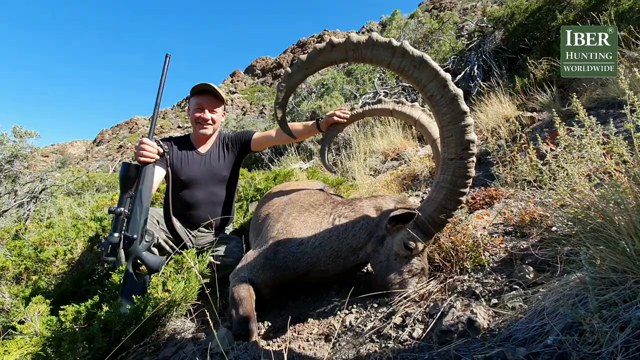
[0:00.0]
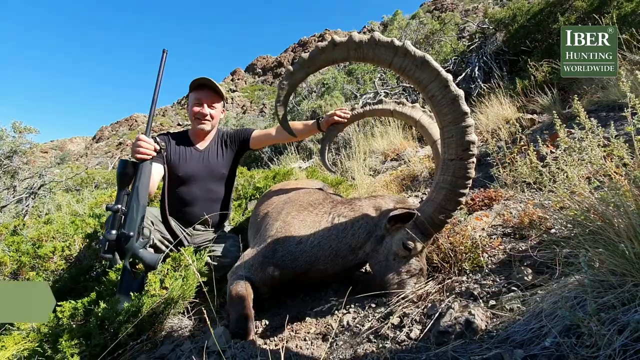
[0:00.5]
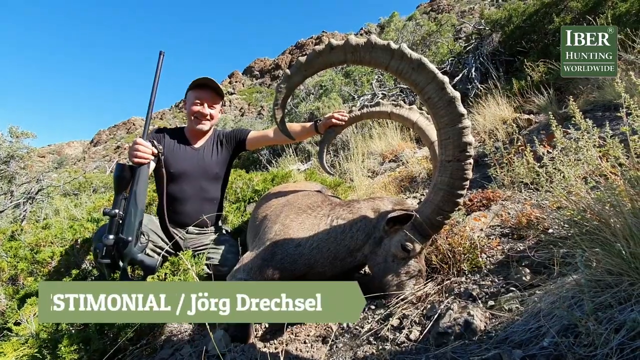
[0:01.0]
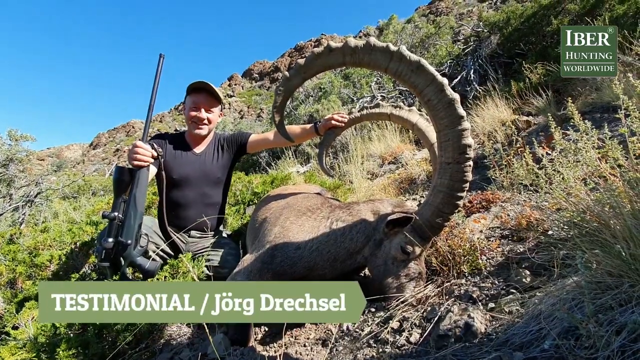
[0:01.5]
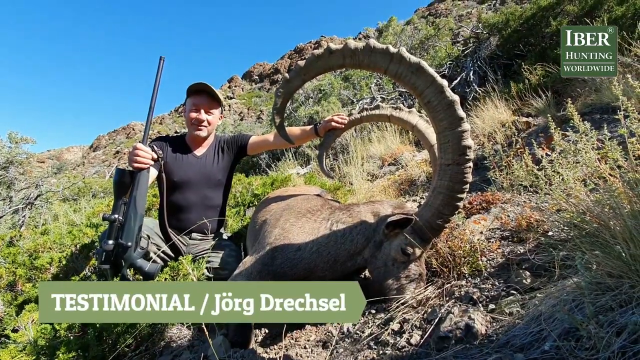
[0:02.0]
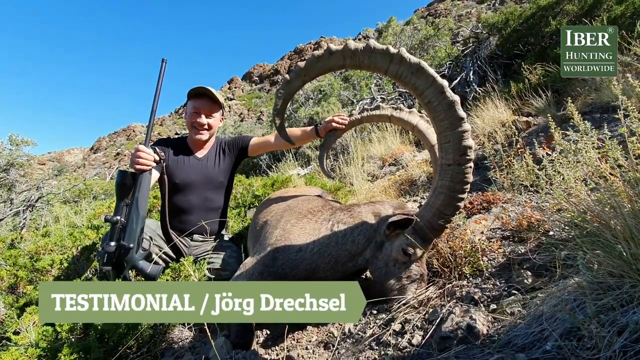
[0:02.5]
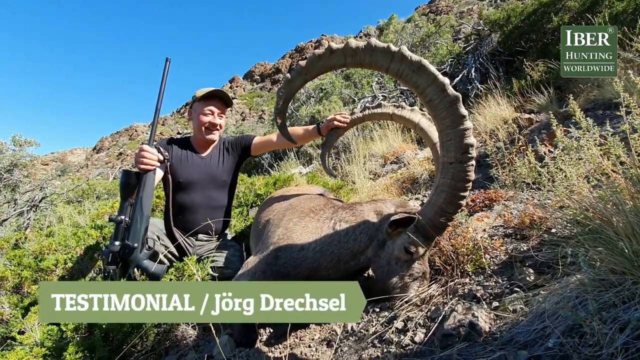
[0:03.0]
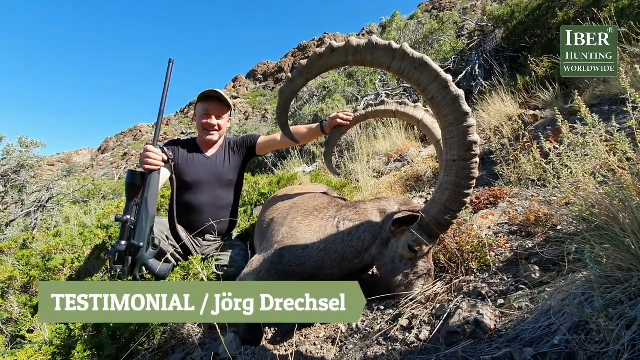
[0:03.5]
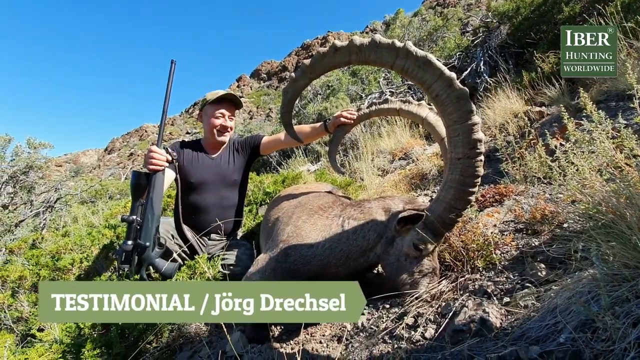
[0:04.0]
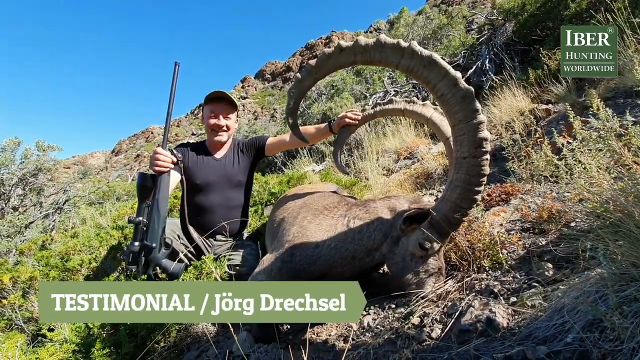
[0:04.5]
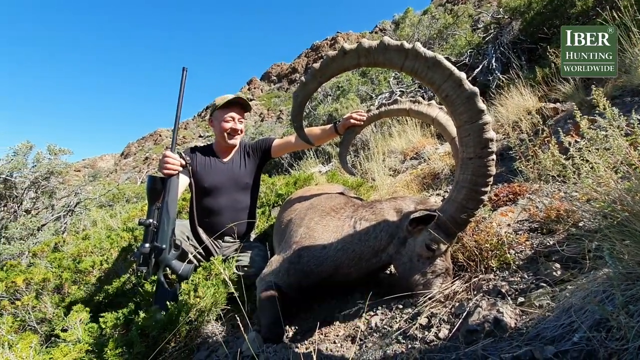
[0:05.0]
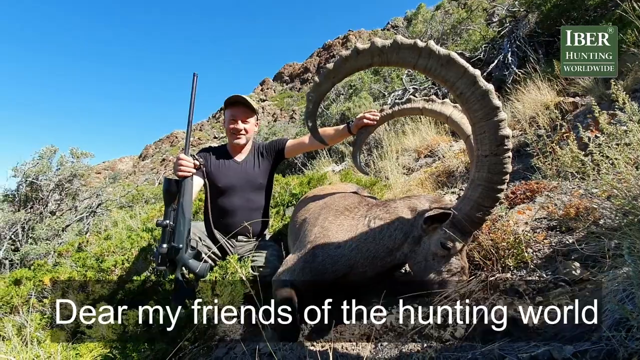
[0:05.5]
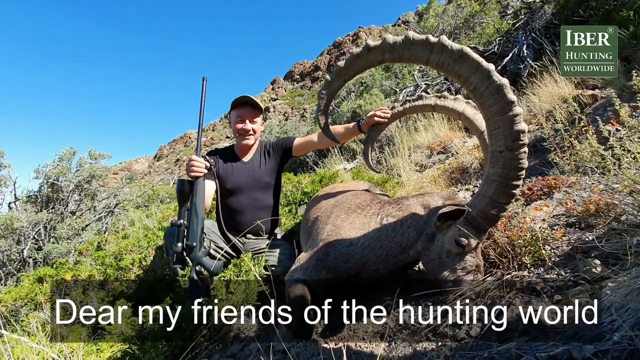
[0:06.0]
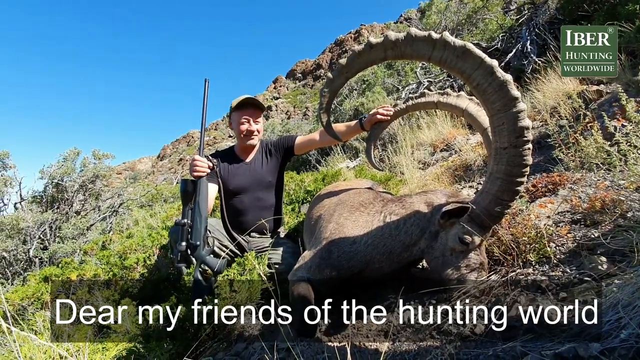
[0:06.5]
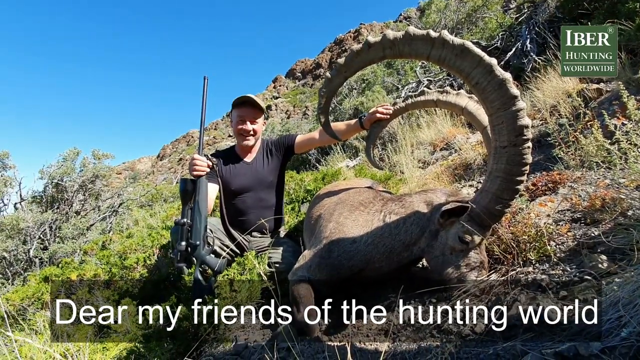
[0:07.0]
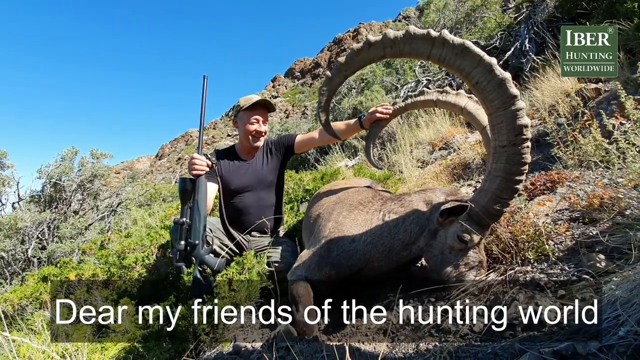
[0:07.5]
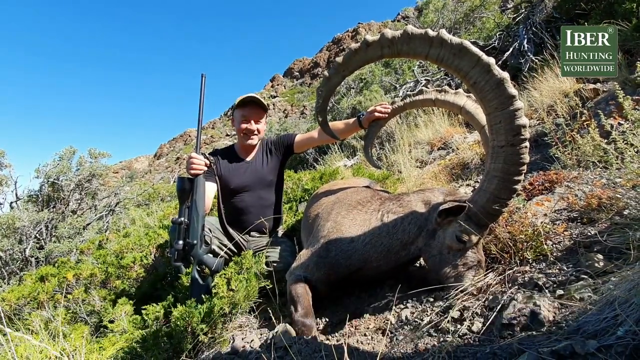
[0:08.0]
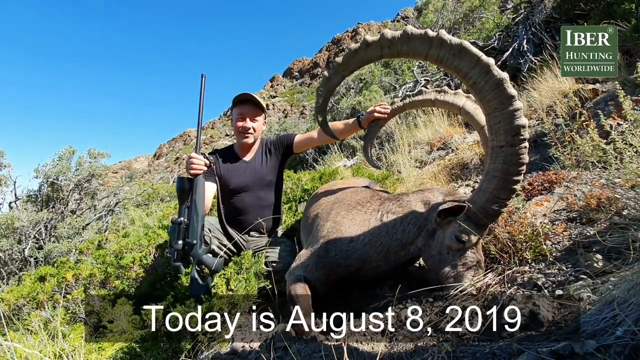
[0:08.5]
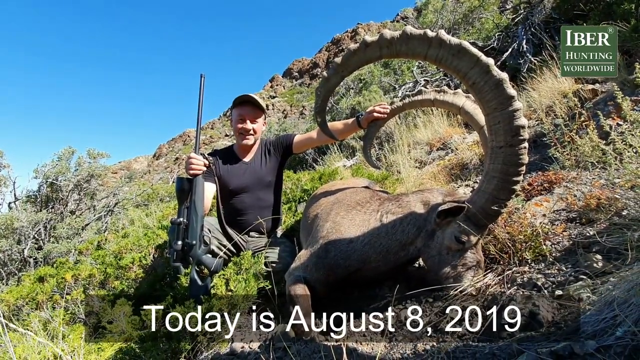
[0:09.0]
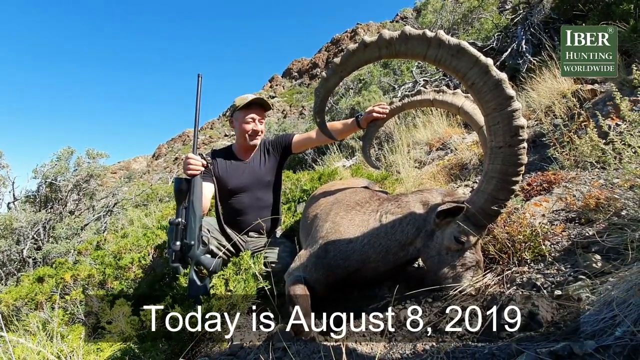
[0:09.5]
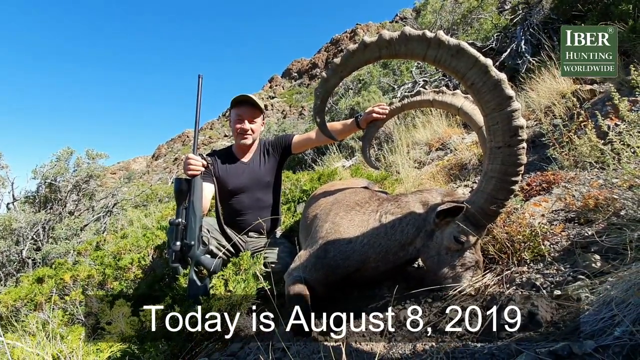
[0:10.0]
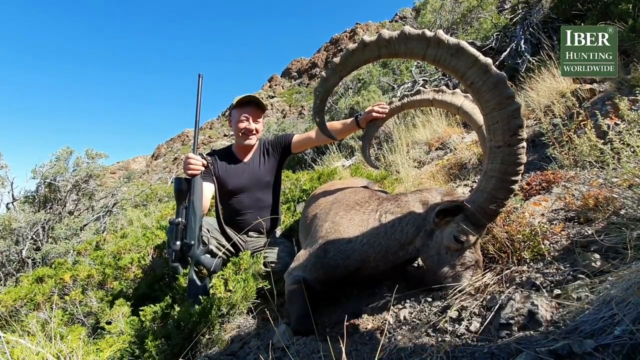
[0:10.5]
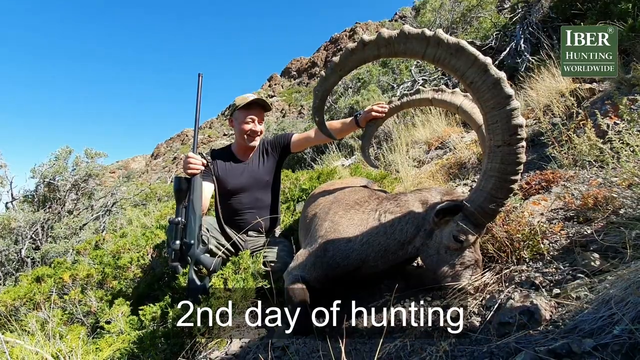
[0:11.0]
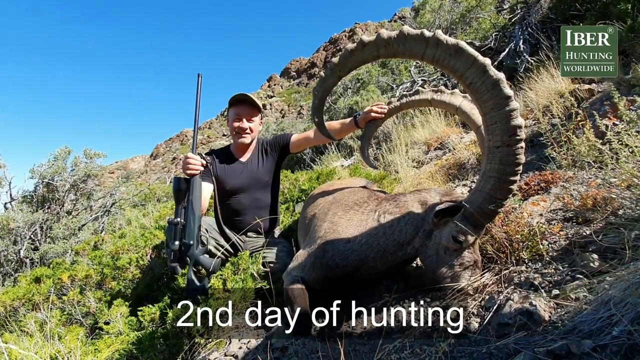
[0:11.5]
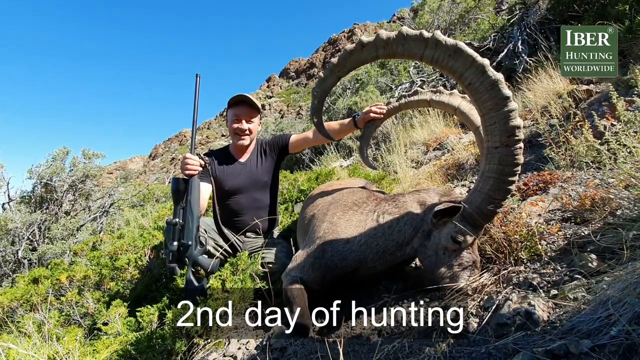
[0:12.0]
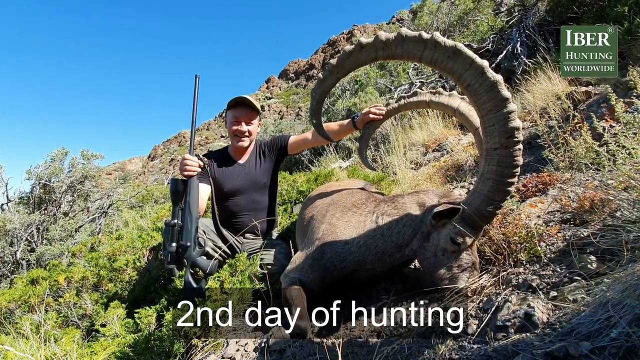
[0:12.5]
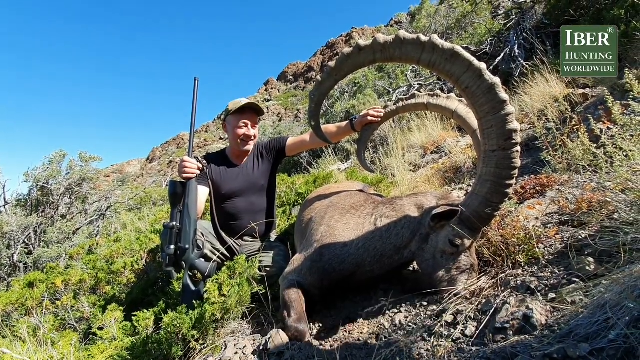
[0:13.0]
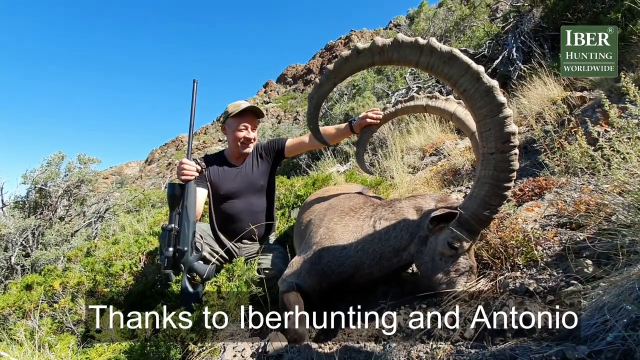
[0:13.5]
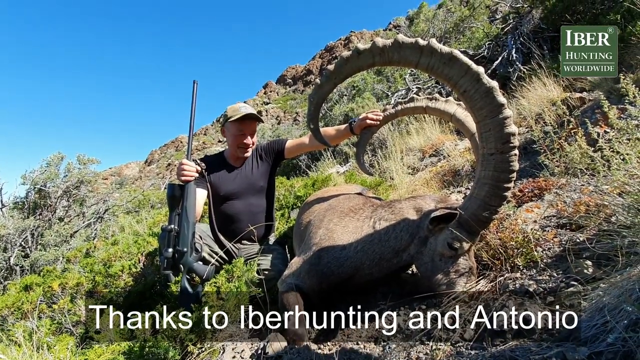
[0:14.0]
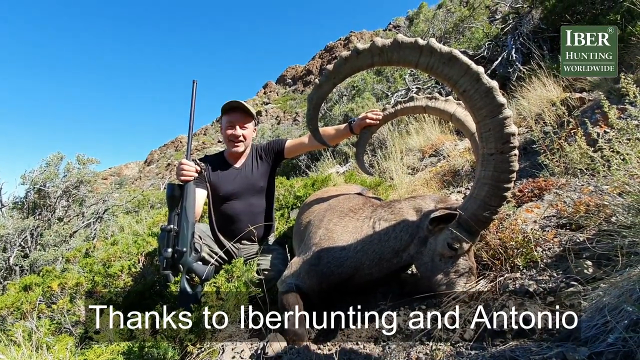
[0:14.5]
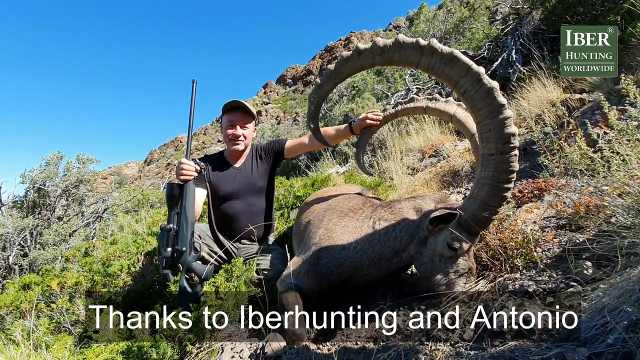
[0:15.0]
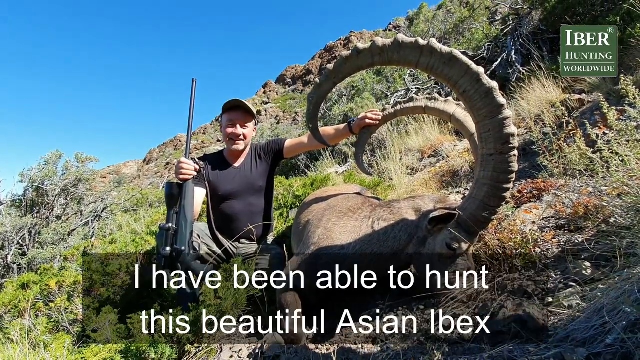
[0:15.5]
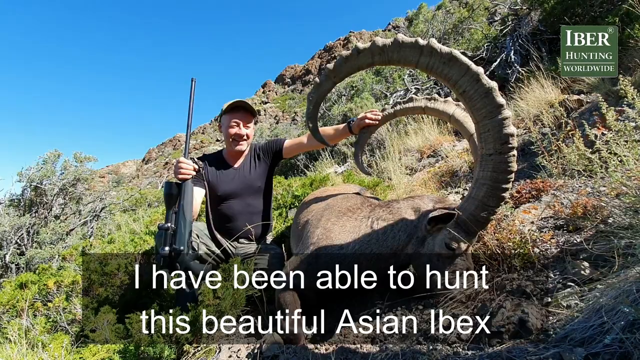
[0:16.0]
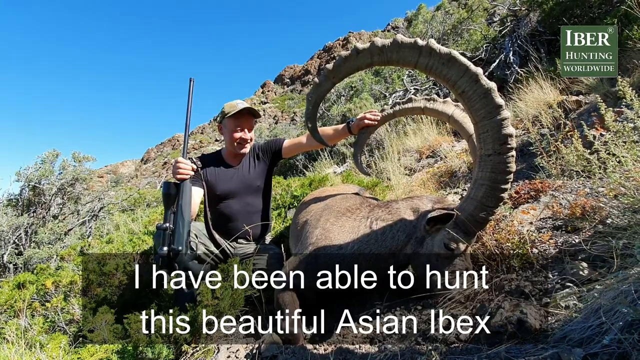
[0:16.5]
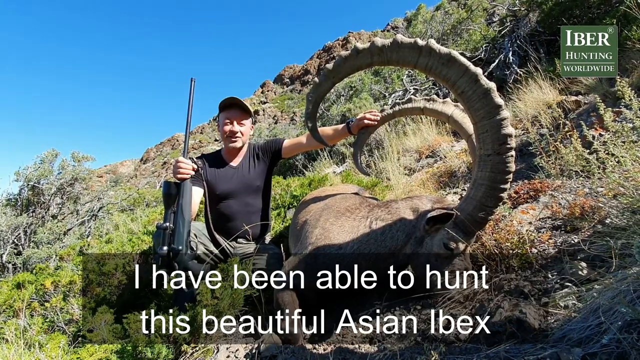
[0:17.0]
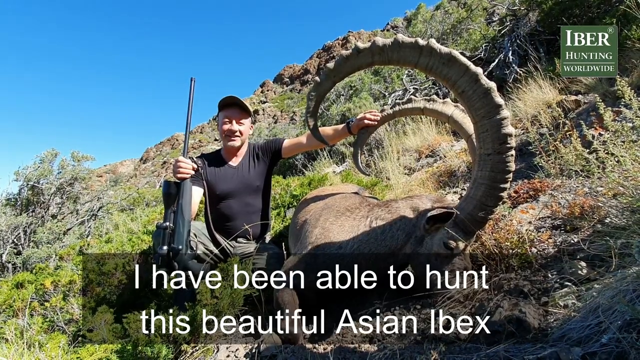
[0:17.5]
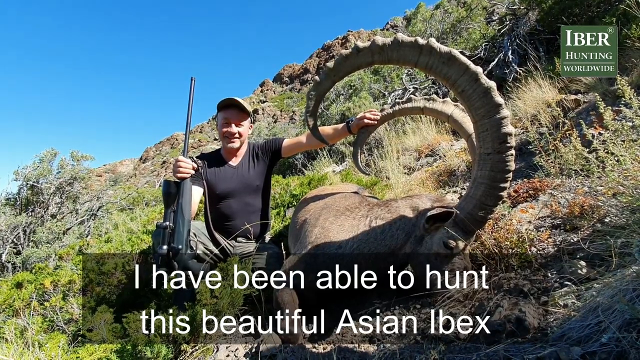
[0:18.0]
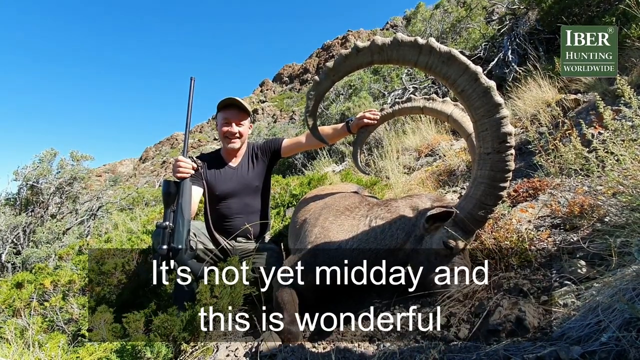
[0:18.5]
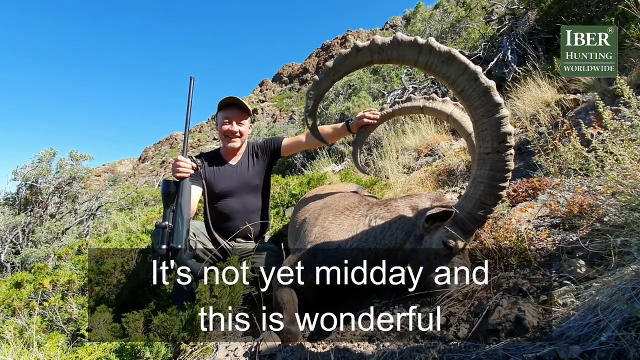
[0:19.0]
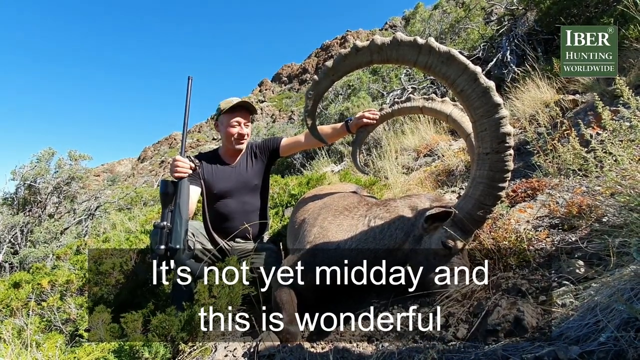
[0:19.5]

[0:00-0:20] A man wearing a black shirt and a baseball cap holds a big rifle in his right hand. He is on a mountain with green grass, and in his other hand he holds the antlers of a dead deer that it looks like he shot. He talks to the camera, and beneath him text reads "testimonial Jorg Drecshel". In the upper right corner it says "Iber hunting worldwide". He looks at the animal, and subtitles underneath read: "Dear my friends of the hunting world. Today is August 8th 2019 second day of hunting. Thanks to Iber hunting and Antonio I have been able to hunt this beautiful Asian Ibex. It's not yet midday and this is wonderful." He stands there smiling, enjoying the animal he has killed, and talks to the camera with great passion and energy while the trees in the background sway in the wind. The camera shakes a little from the wind as he keeps talking through subtitles. It is a scene of great joy for the man.